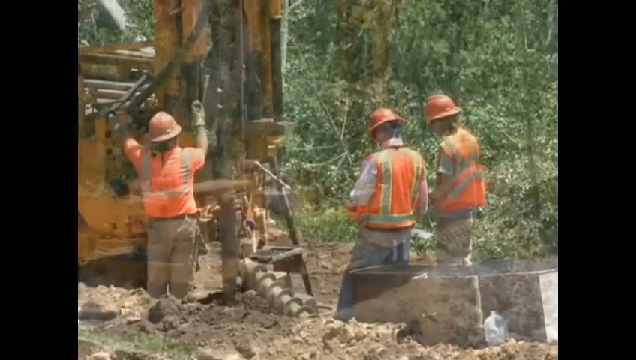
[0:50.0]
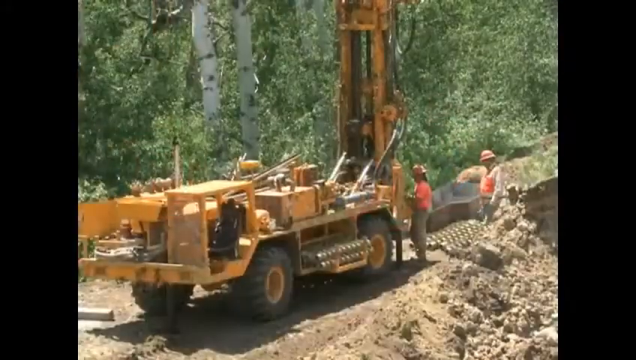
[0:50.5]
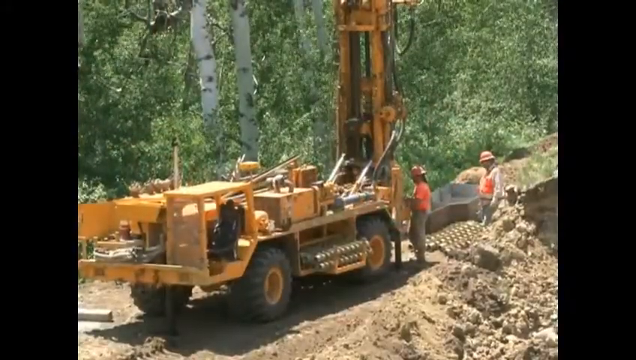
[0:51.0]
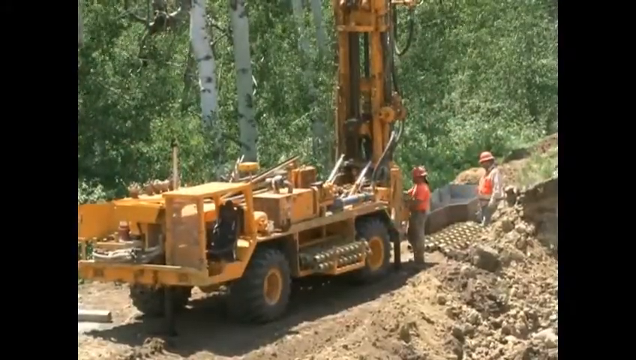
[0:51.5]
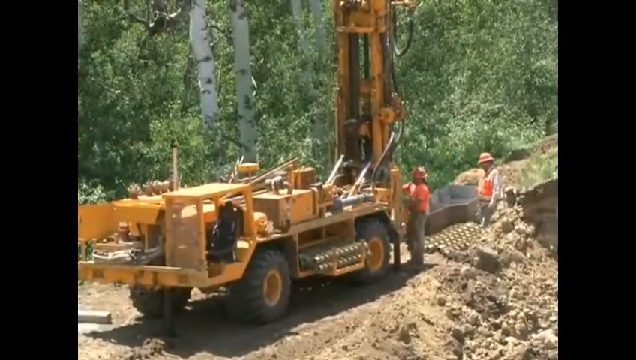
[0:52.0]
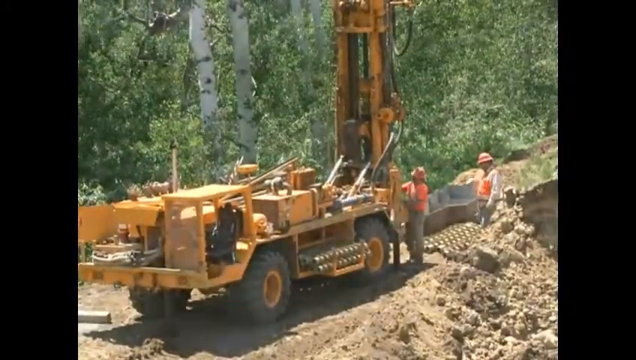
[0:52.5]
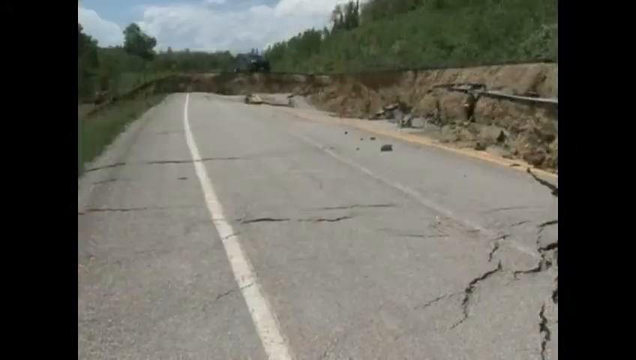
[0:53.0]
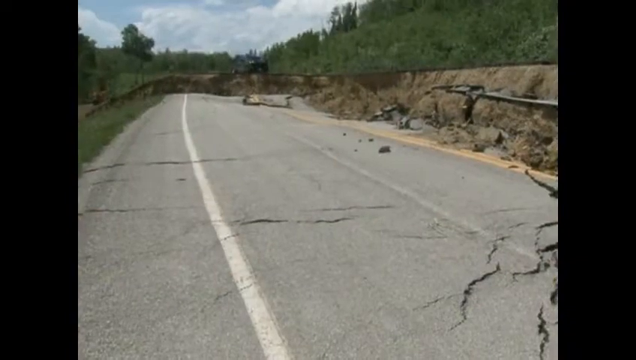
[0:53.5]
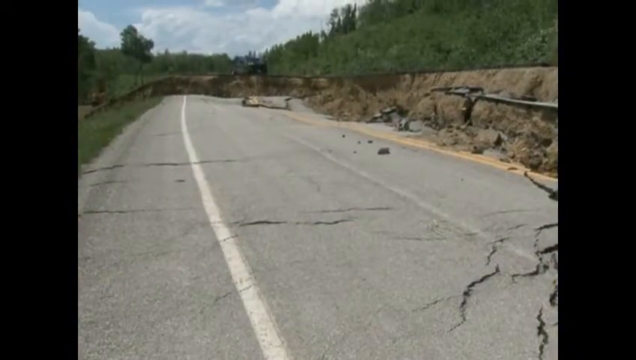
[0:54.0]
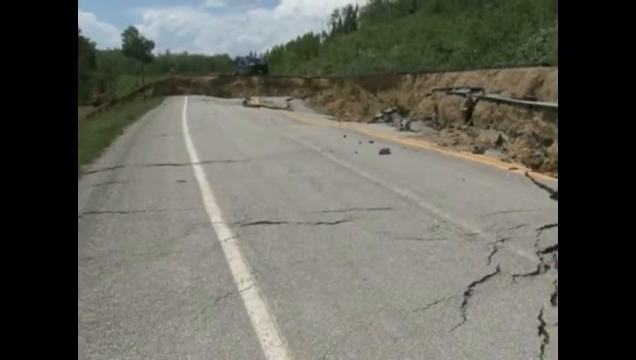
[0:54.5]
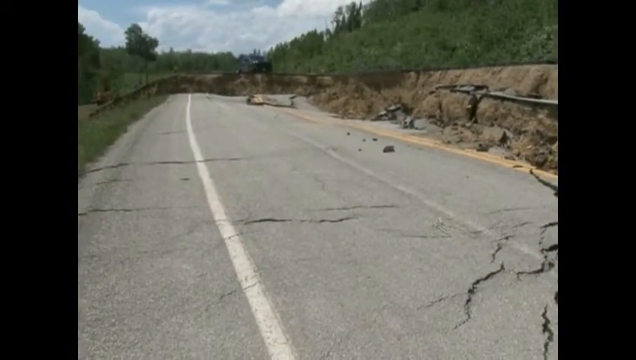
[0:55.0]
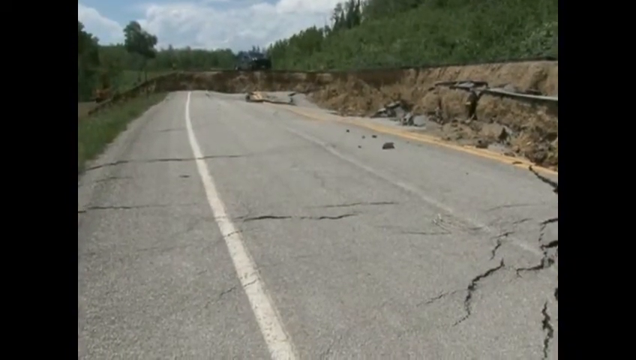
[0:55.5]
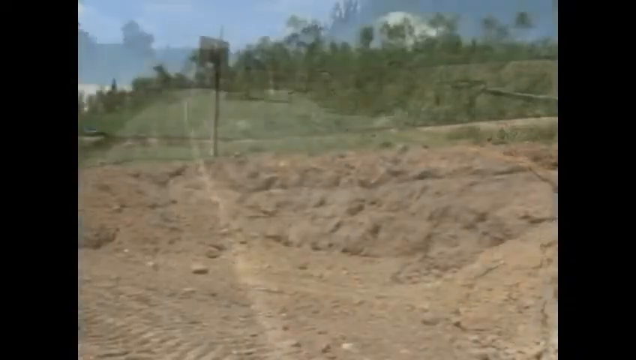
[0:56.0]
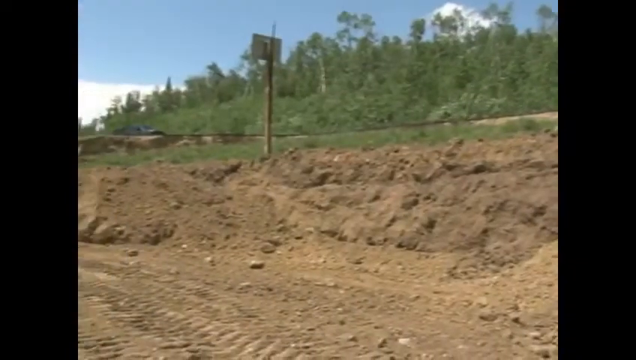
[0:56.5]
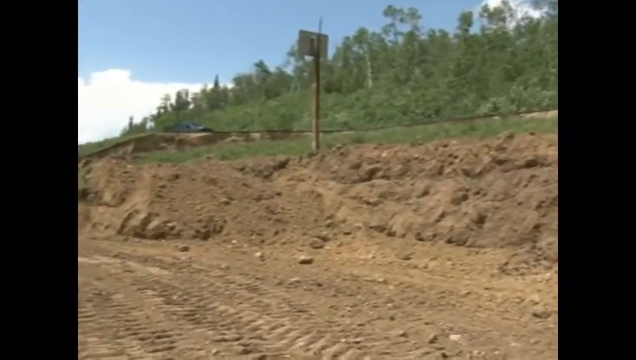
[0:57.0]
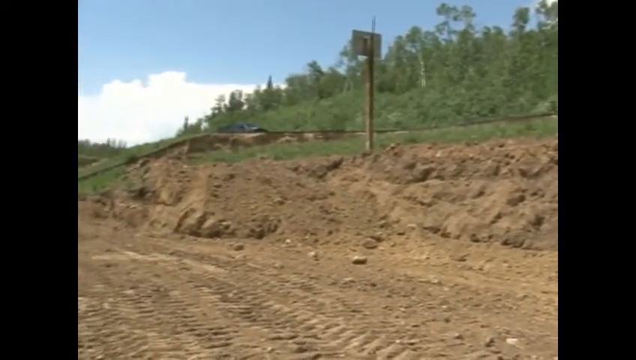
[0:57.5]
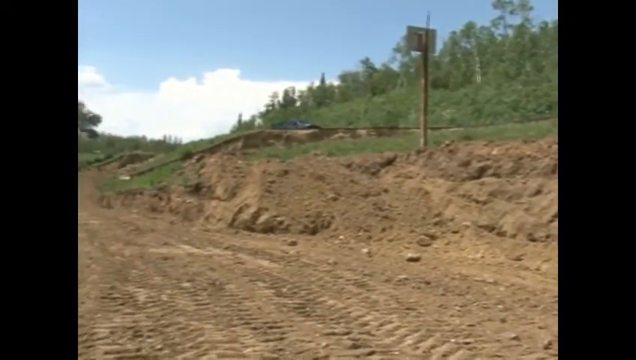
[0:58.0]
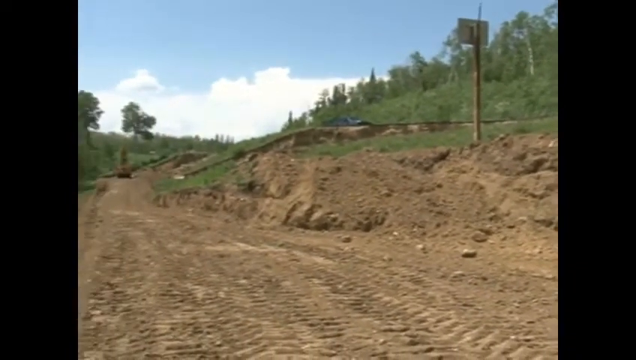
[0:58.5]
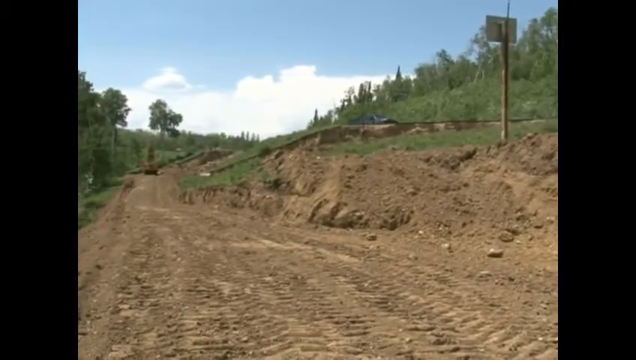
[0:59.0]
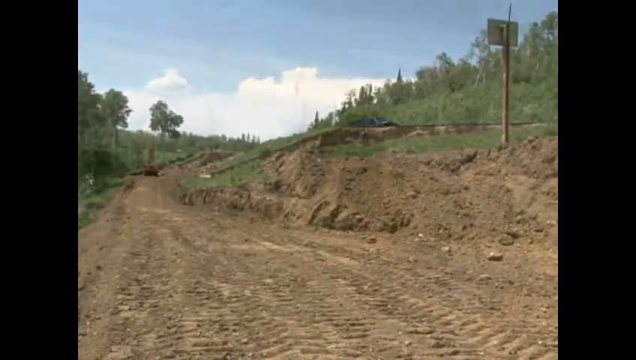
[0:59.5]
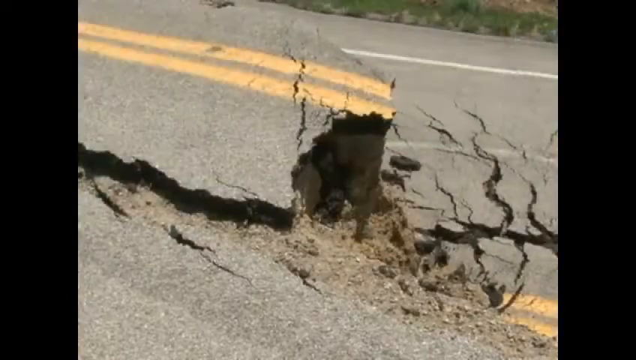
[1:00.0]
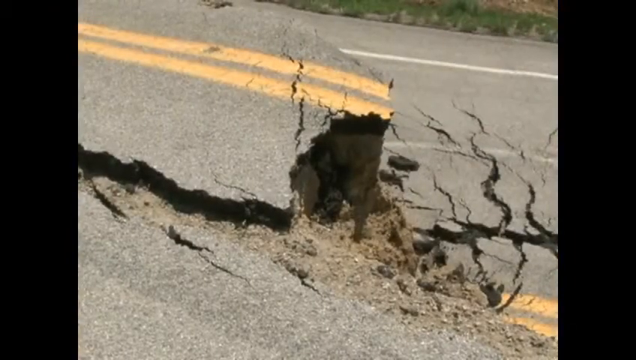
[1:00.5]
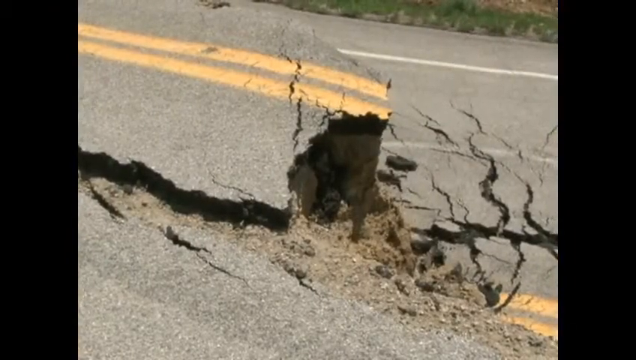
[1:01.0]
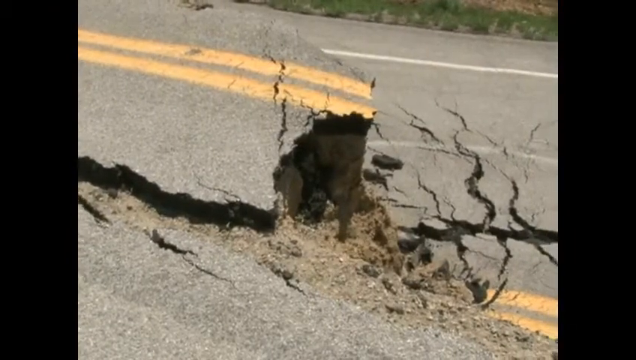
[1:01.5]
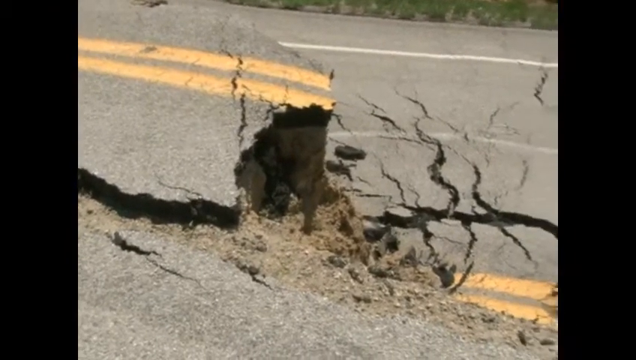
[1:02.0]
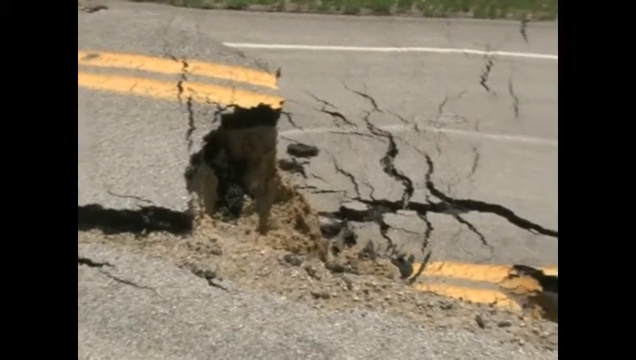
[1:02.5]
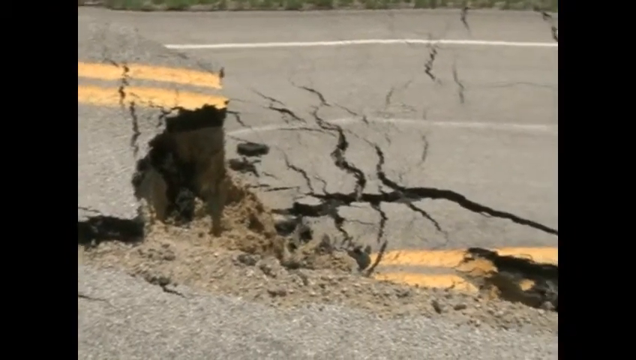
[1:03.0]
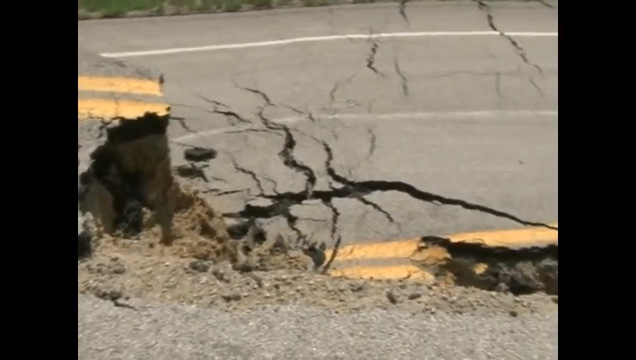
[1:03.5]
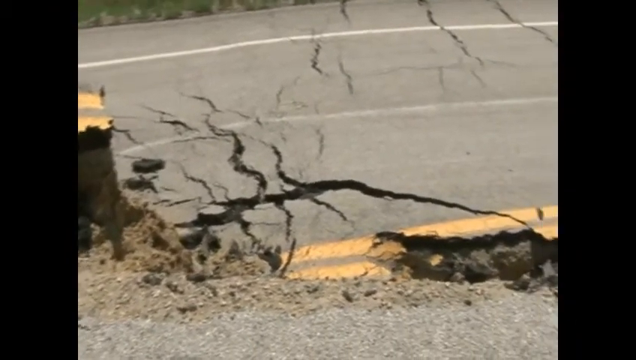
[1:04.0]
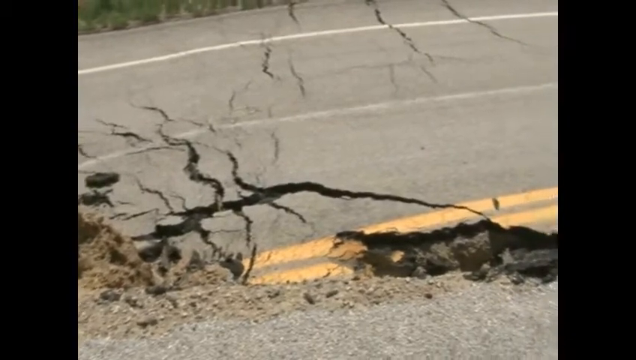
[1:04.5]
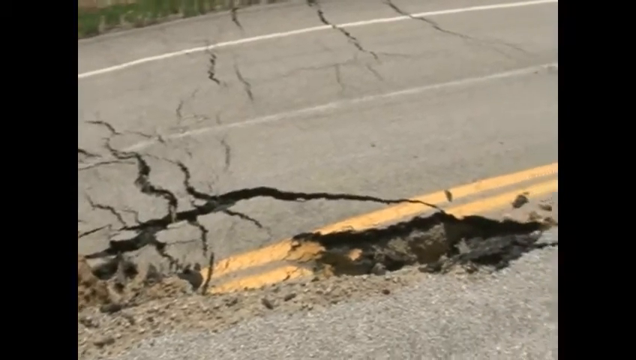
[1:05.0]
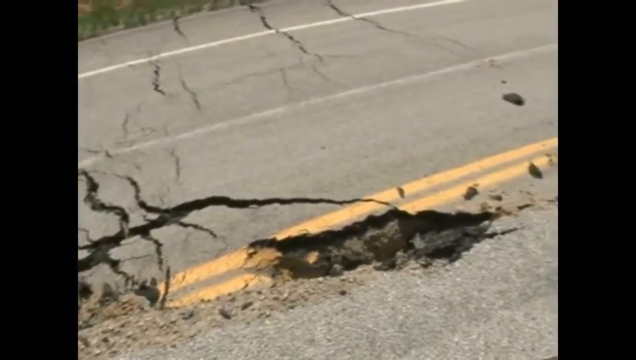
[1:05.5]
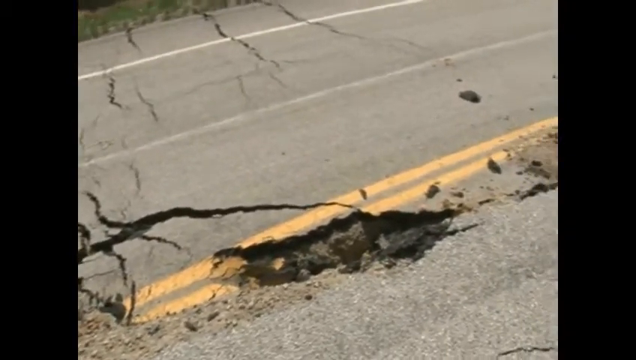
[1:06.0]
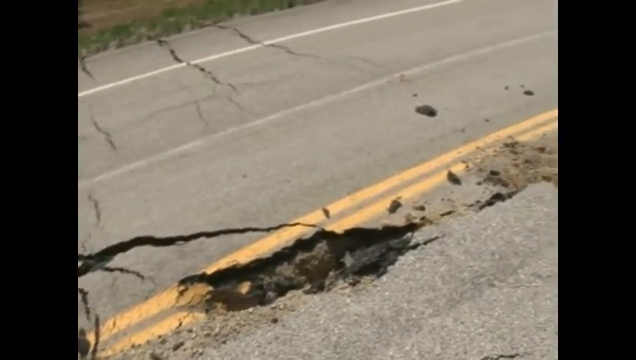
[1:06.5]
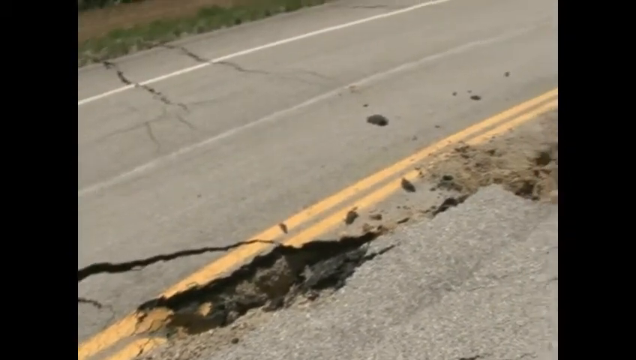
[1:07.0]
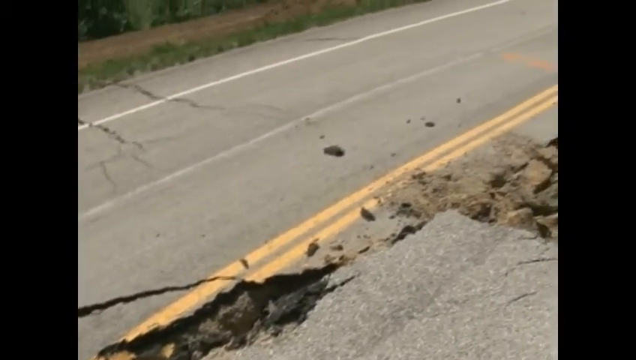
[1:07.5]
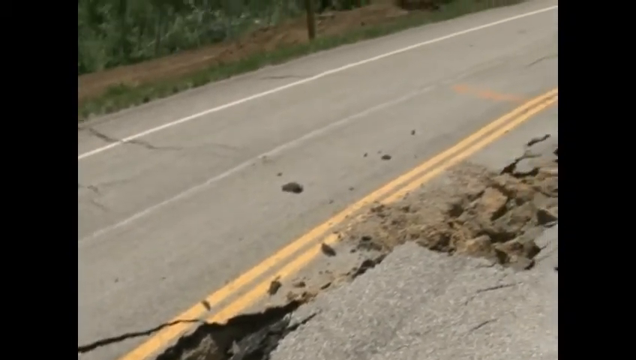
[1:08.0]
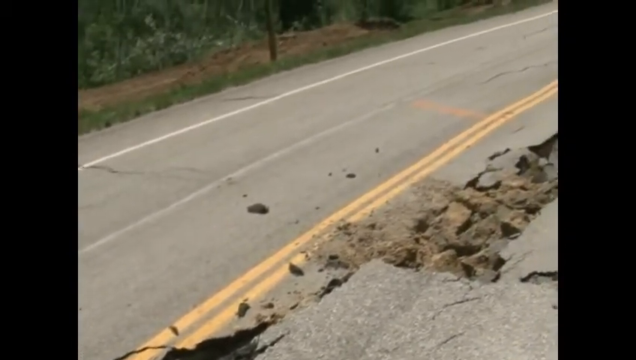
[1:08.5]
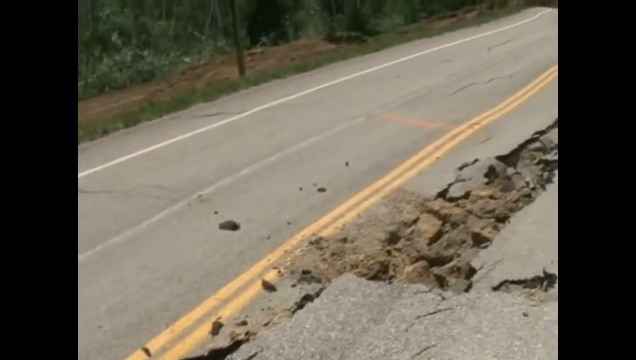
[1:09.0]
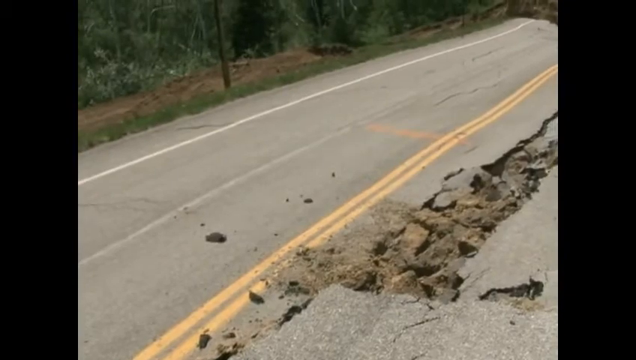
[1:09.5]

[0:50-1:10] A wider-angle shot shows the vehicle, with two of the men in orange vests standing there and what seems to be some sort of other drill bit on the ground that is hard to make out. More shots show the road and its cracks, with a yellow stripe down the middle with reflectors and white stripes marking the shoulder. There is lots of greenery and trees around, and a big mess of dirt where the road has given way.